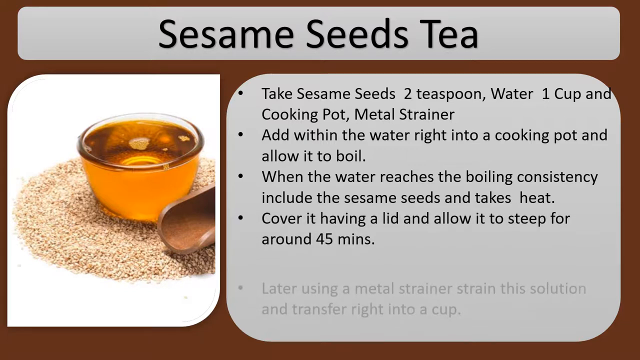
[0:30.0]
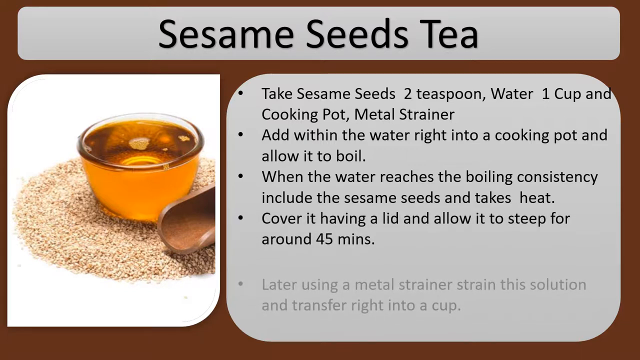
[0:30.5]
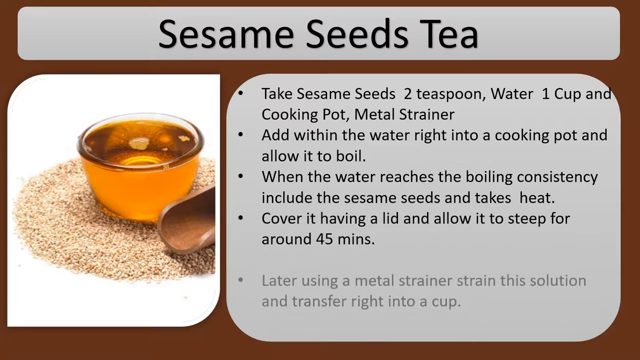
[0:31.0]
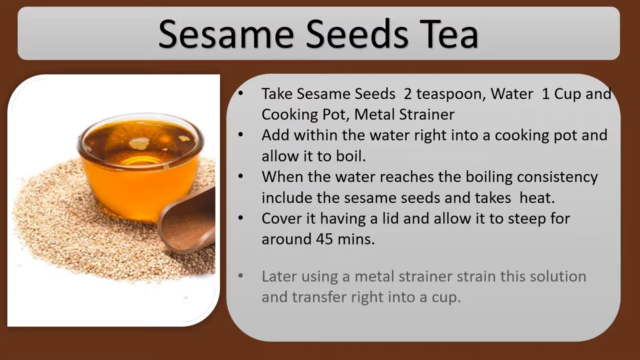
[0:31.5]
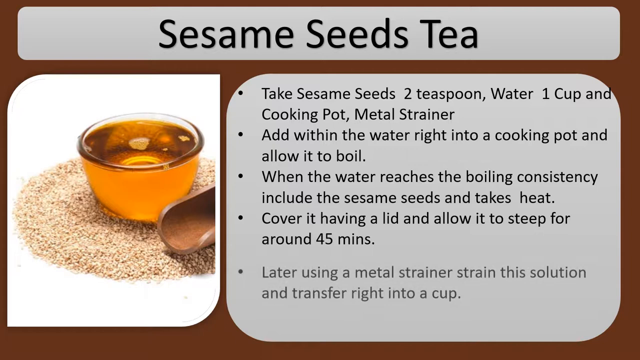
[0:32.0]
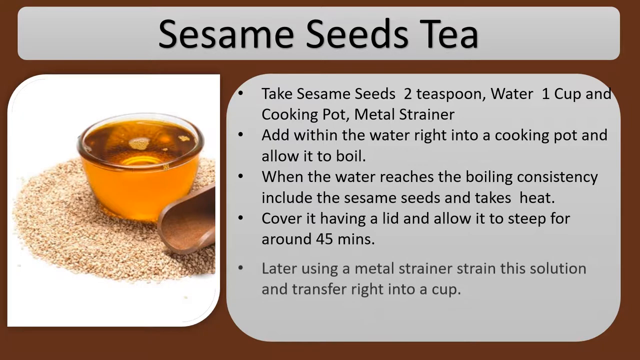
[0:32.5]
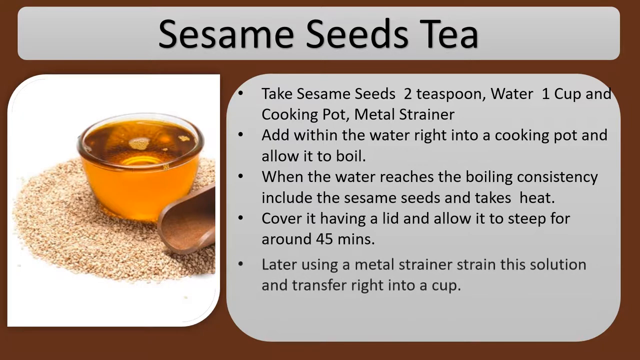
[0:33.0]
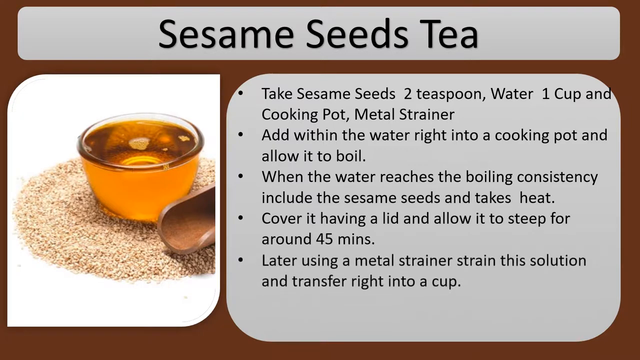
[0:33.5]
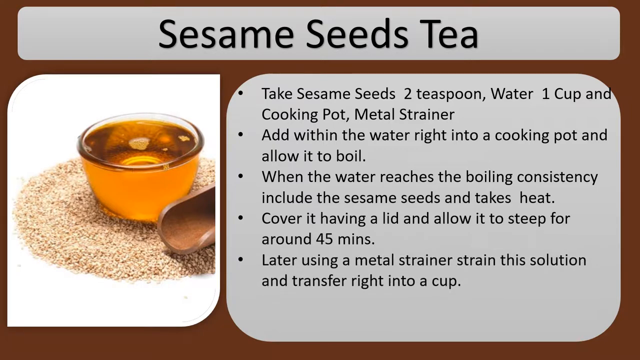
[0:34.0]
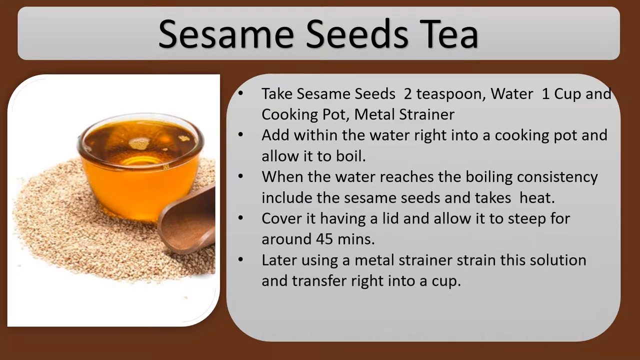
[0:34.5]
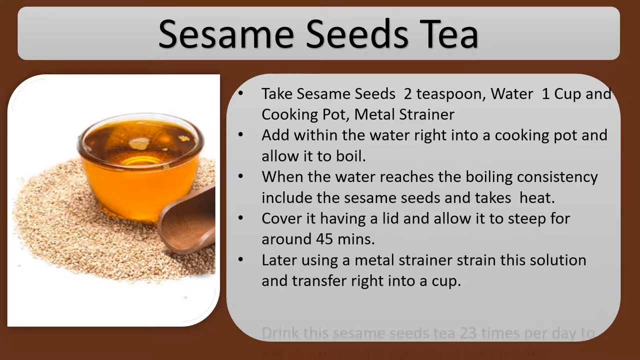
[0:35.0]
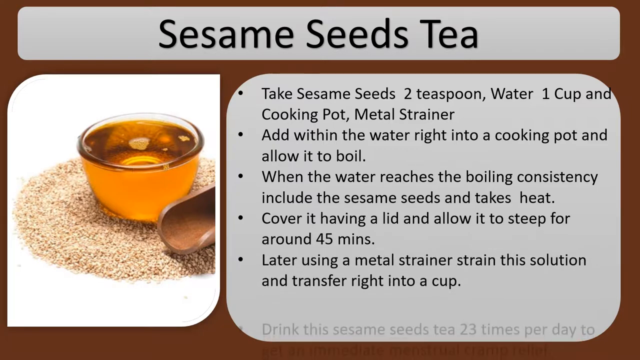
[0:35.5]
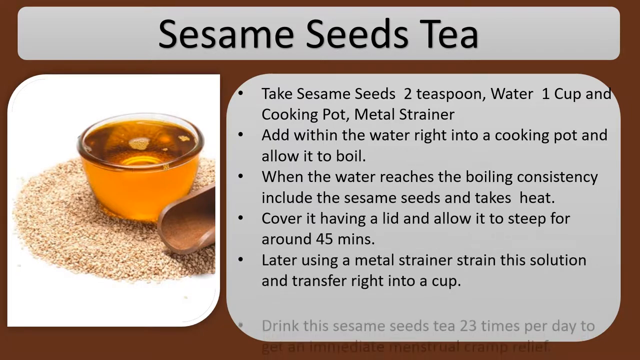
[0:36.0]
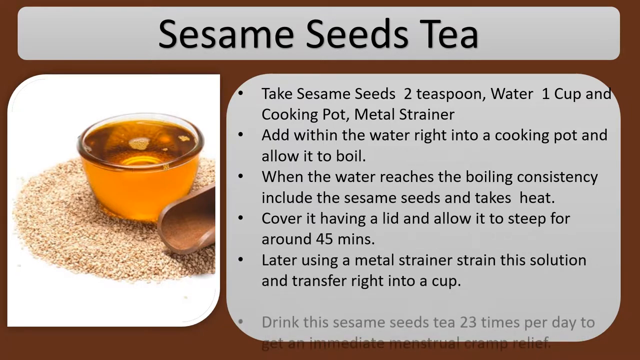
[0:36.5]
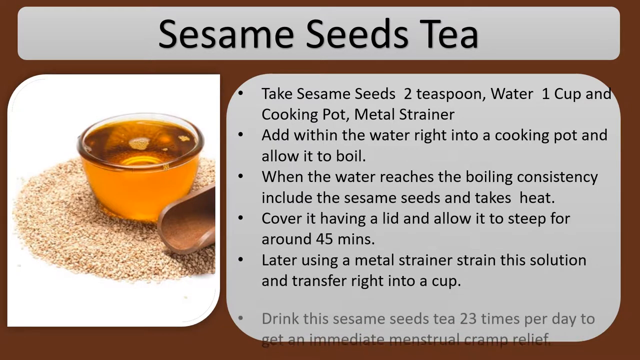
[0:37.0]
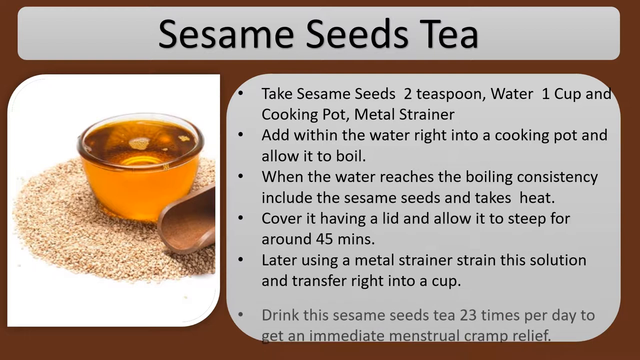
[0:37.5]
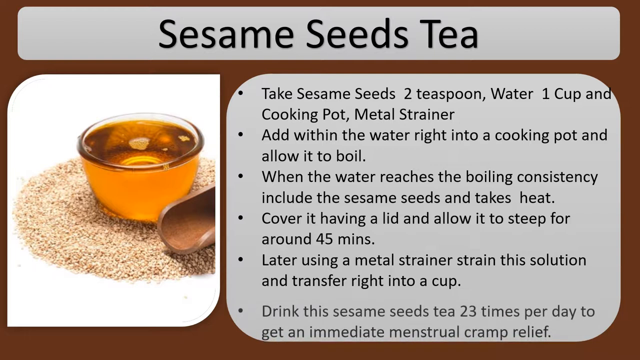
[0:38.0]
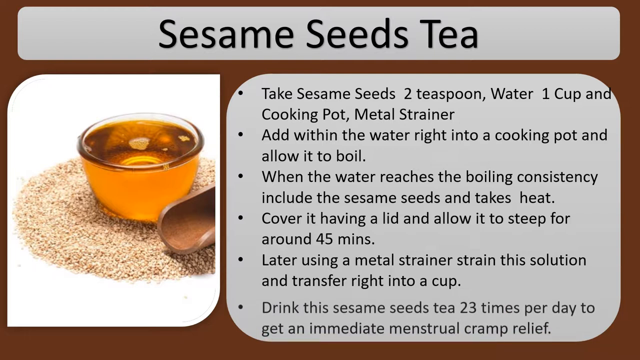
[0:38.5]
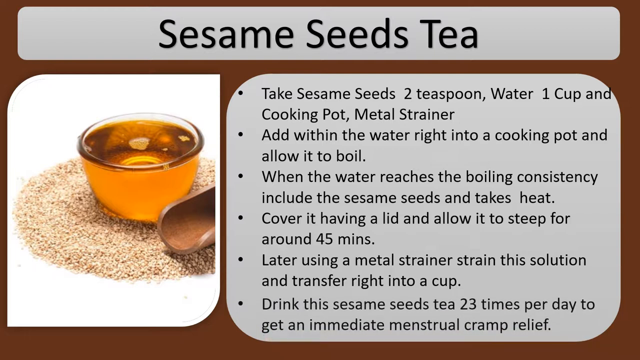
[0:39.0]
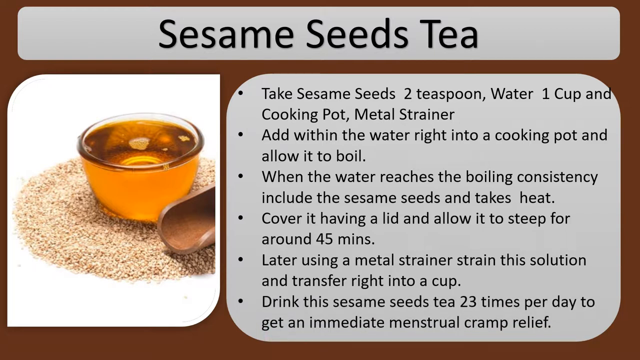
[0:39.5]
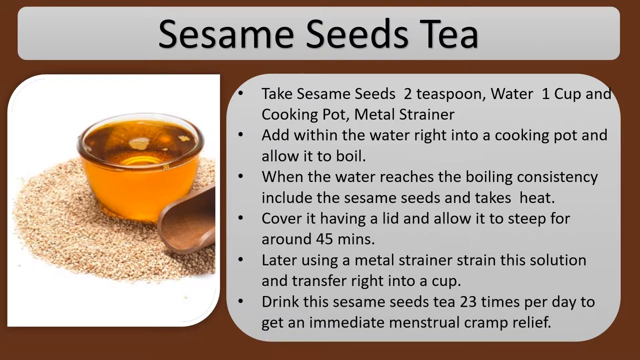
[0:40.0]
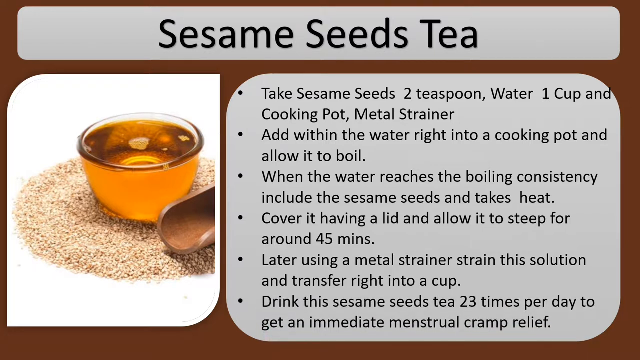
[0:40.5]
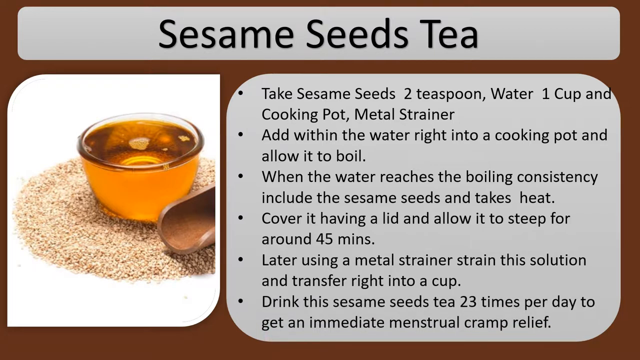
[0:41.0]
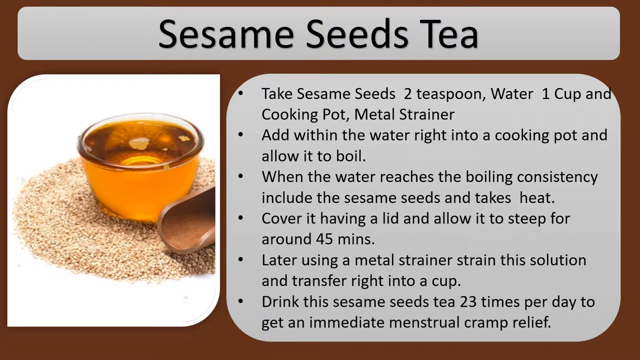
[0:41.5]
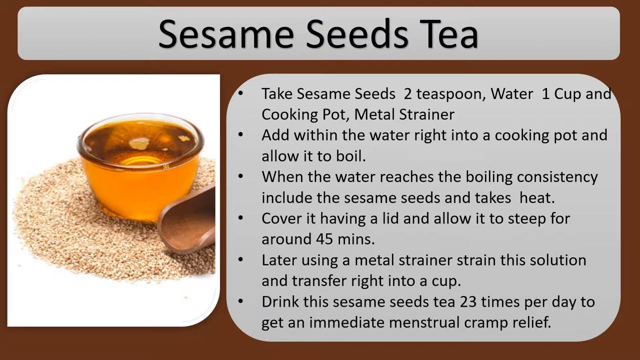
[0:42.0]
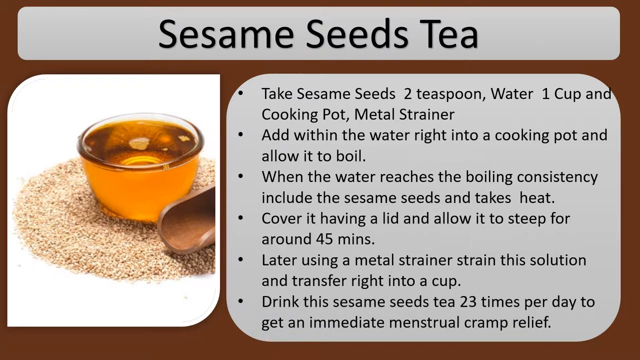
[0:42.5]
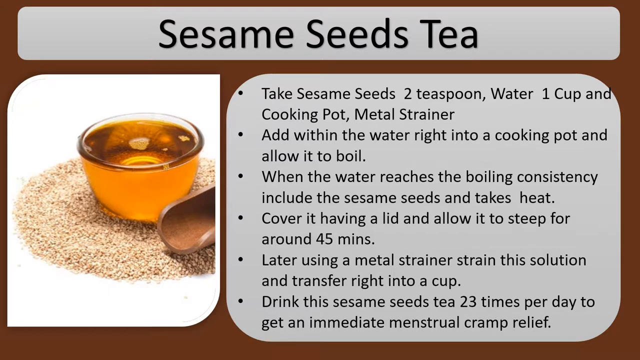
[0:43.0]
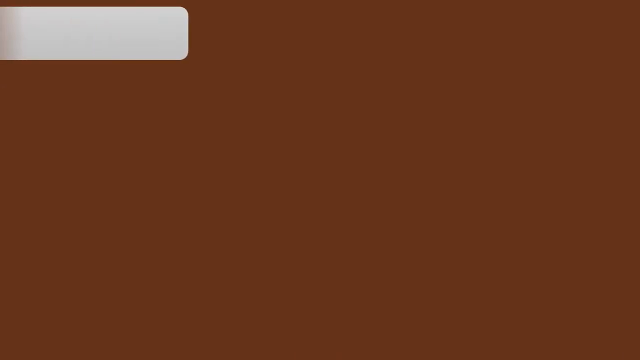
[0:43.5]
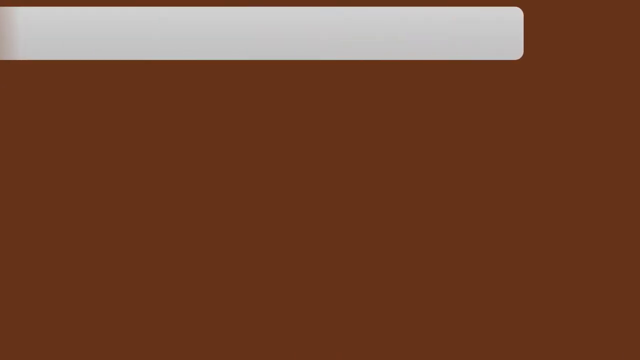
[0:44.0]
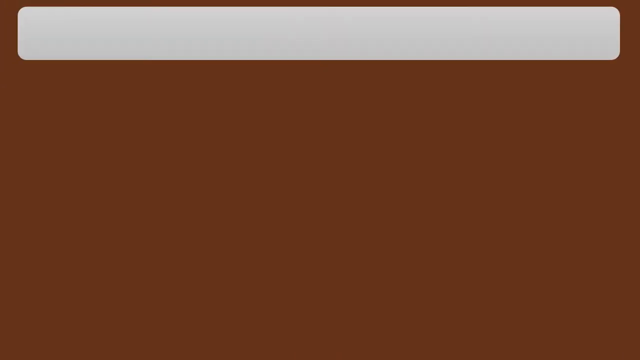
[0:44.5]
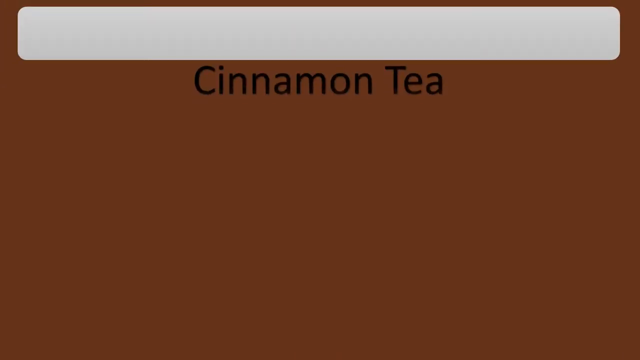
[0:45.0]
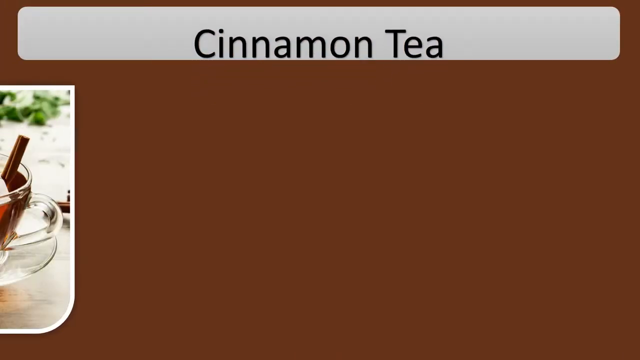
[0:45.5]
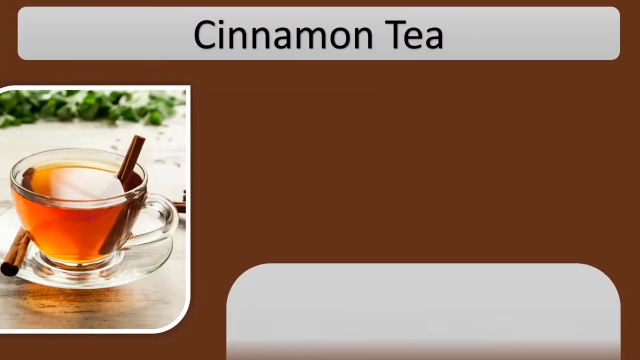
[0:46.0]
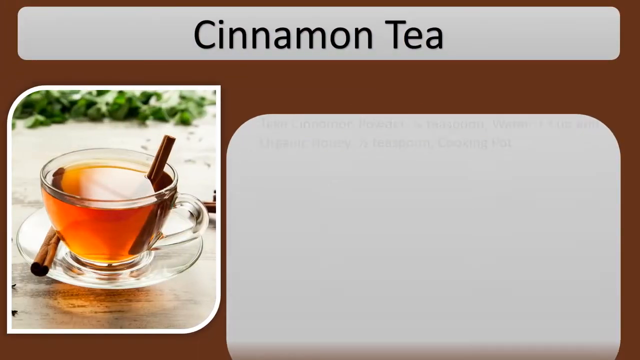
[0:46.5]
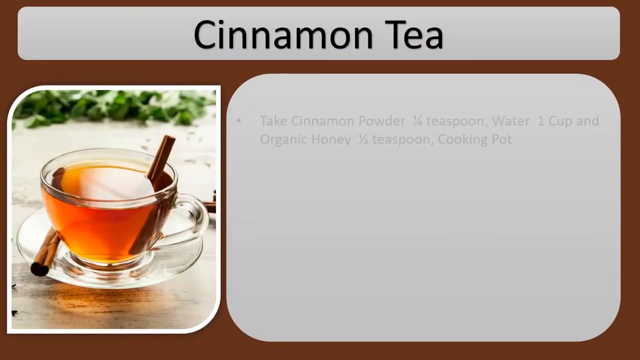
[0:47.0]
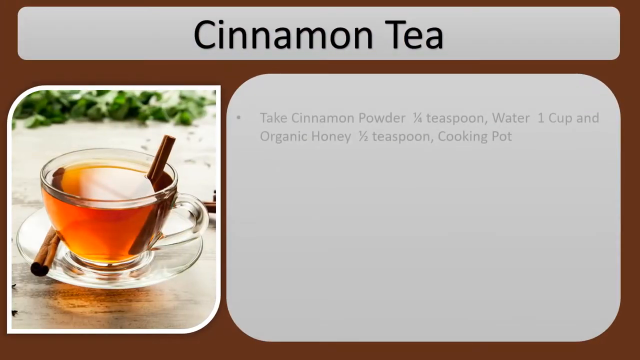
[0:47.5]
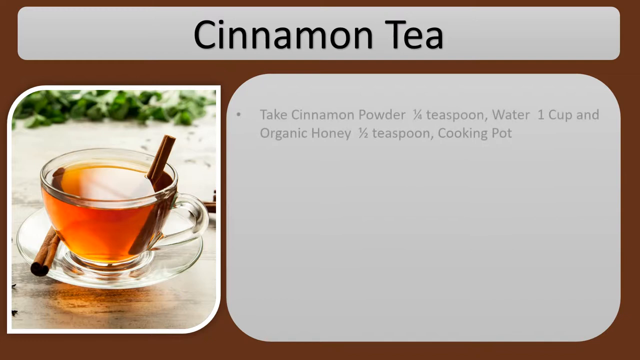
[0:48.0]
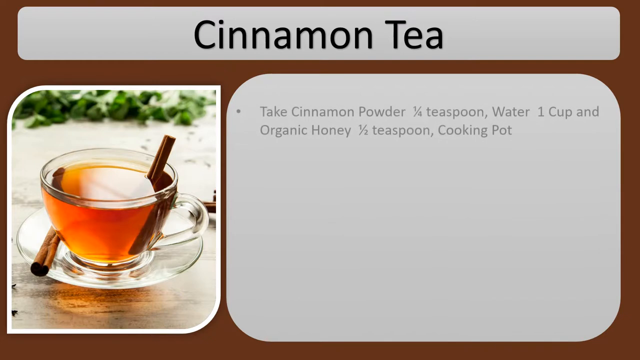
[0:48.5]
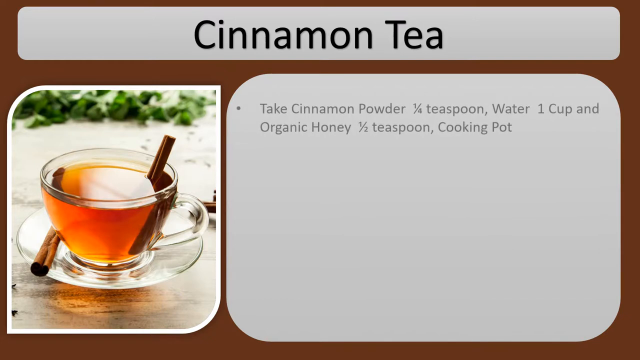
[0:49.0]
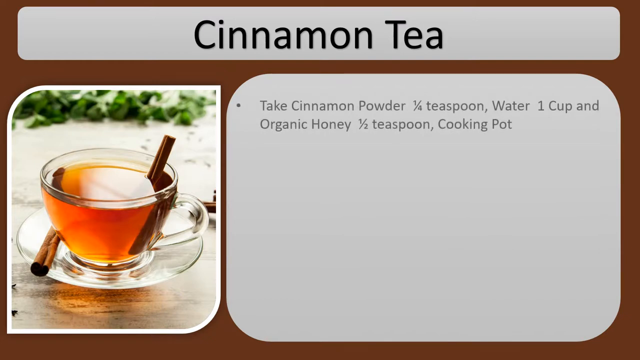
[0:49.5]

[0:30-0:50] The same ungrammatical bullet points remain on screen, and the next two bullet points come up: "cover it having a lid and allow it to steep for around 45 minutes" and "later using a metal strainer strain the solution and transfer right into a cup." Another bullet point reads "drink this sesame seed tea 23 times per day to get an immediate menstrual cramp relief." A new slide with the same background follows, titled "cinnamon tea." On the left side is a clear glass mug on a saucer, holding what appears to be tea judging by its color, with a cinnamon stick both on the saucer and in the tea.